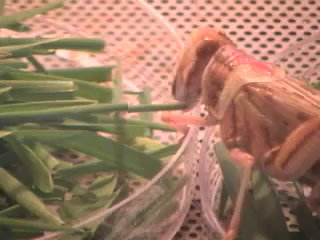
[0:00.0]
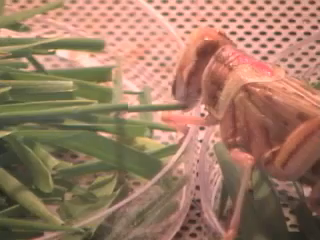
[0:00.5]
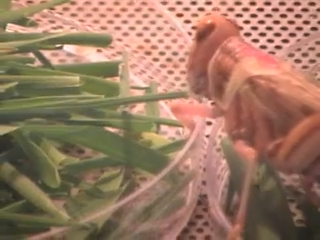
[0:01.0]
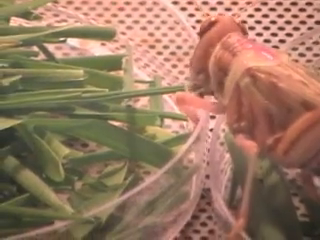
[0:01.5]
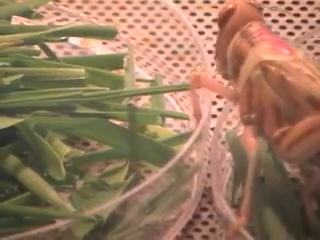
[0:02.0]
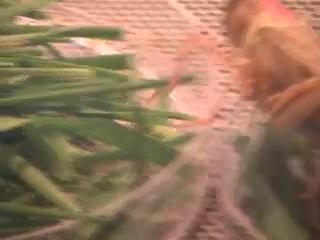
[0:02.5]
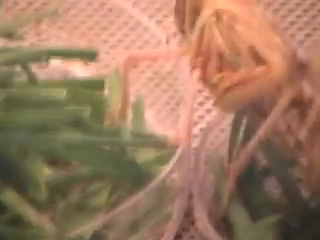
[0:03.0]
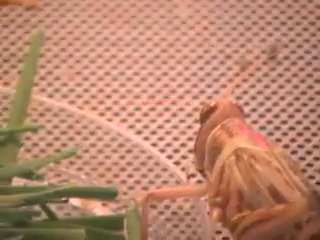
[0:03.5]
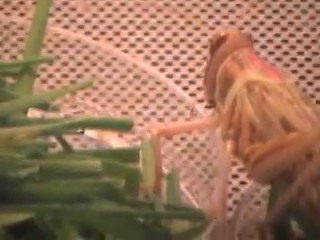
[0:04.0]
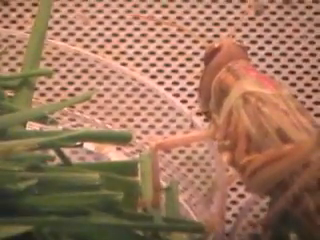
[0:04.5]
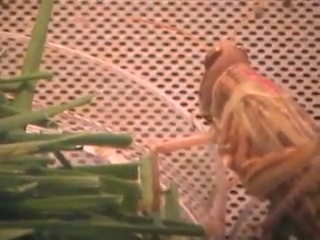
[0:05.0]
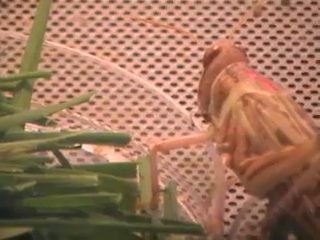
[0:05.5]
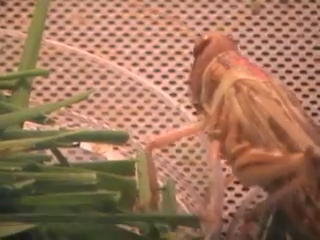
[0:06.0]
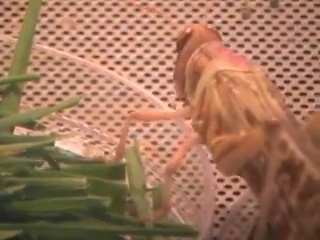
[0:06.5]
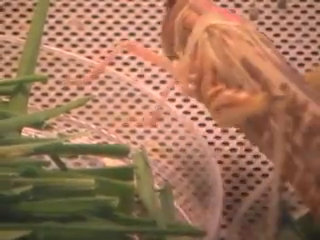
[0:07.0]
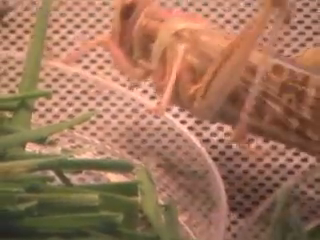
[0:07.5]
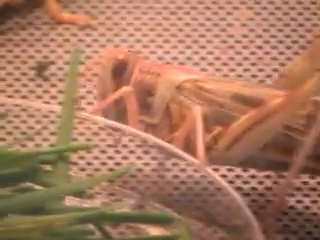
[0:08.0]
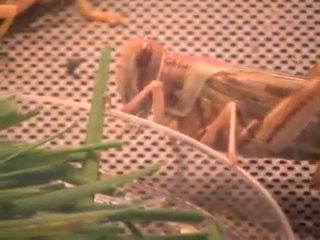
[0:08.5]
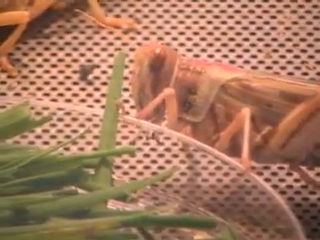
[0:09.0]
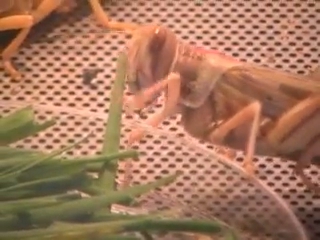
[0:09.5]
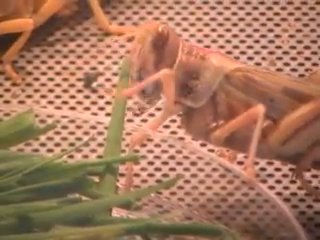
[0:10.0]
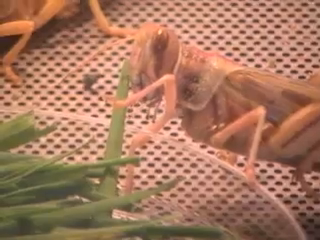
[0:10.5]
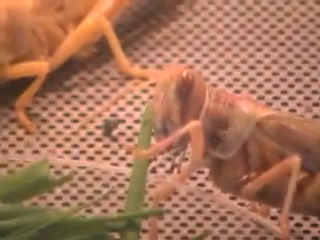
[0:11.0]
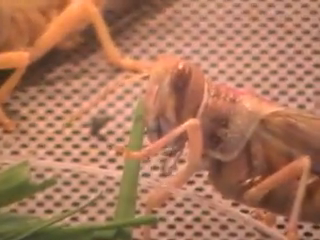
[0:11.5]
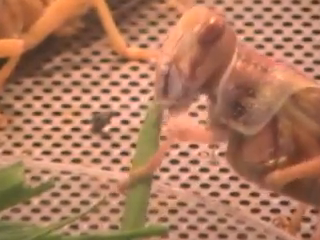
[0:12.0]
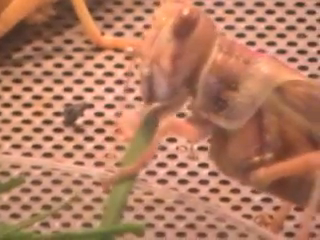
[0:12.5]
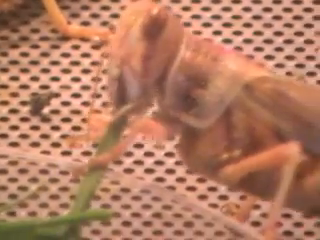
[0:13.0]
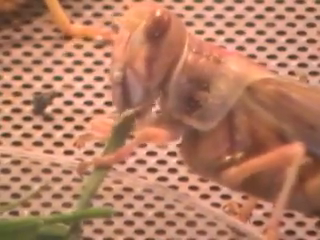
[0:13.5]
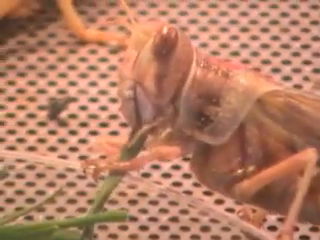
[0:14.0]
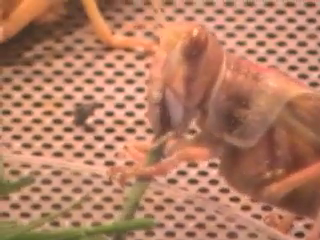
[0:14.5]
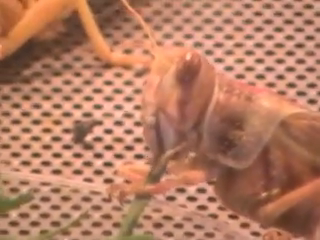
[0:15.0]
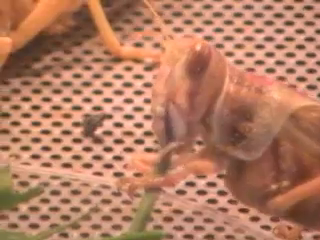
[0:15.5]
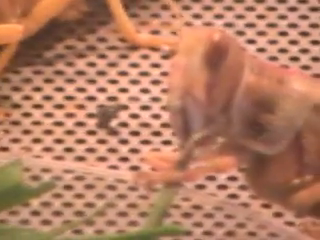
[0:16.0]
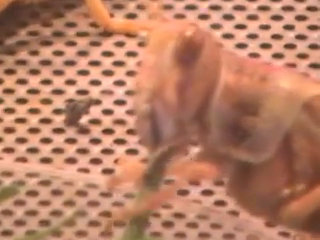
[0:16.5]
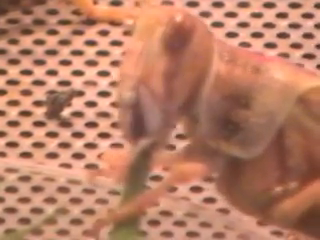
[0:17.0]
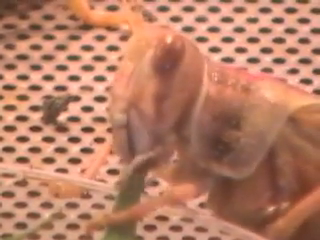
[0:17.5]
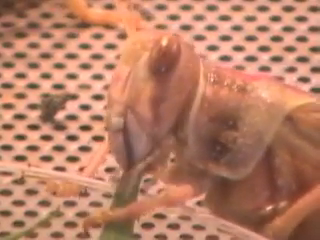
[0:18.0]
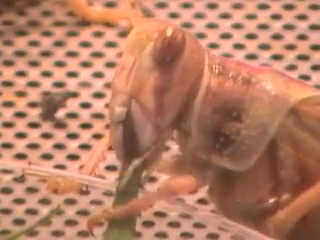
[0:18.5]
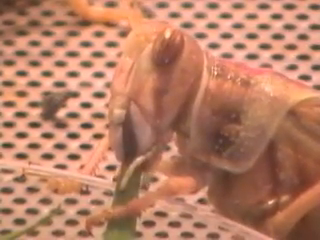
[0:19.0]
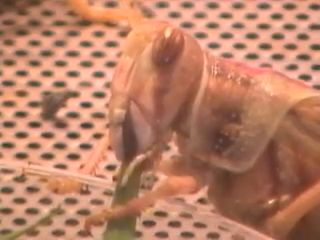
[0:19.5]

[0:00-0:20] A grasshopper eats some grass and kind of walks along the outside of a rimmed area where the grass is kind of portioned off. Light shines down on the grasshopper, making it clearly visible. It kind of uses its legs to position the green strip of grass near its mouth and then kind of chews on the end of the piece of grass. In the background to the upper left is another grasshopper, which doesn't seem to be moving much at the moment. A cup placed inside the mesh area is filled with grass as food for the grasshoppers. The grasshopper is kind of a beige color with some brown stripes and dots, and there is some pink on the back of its neck area.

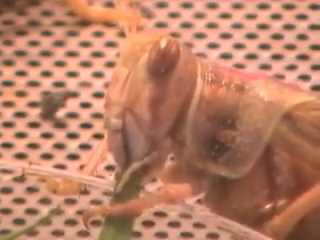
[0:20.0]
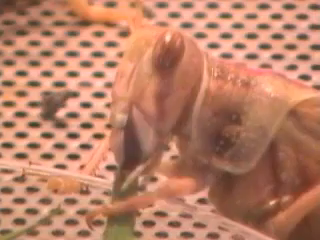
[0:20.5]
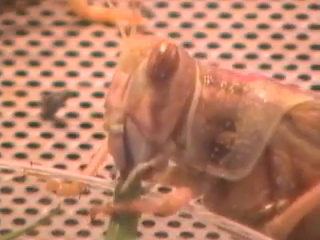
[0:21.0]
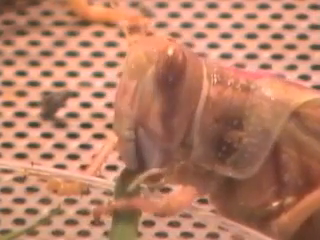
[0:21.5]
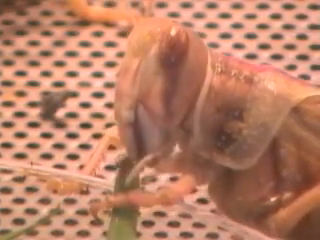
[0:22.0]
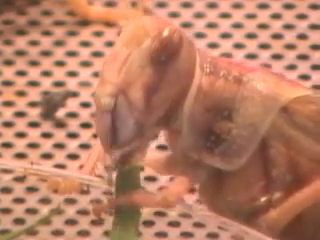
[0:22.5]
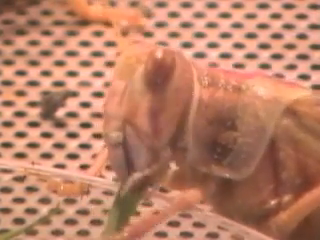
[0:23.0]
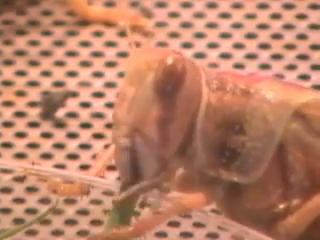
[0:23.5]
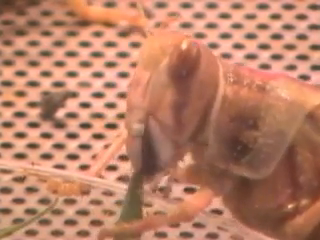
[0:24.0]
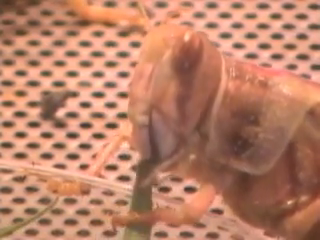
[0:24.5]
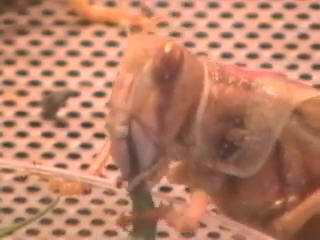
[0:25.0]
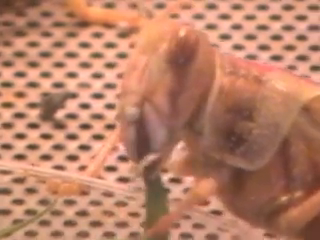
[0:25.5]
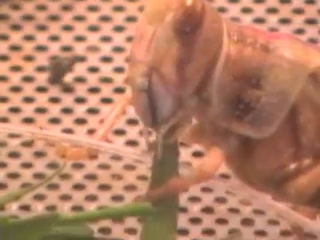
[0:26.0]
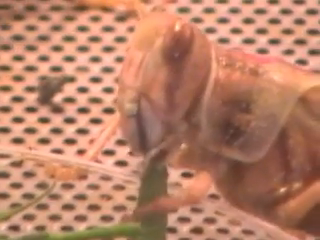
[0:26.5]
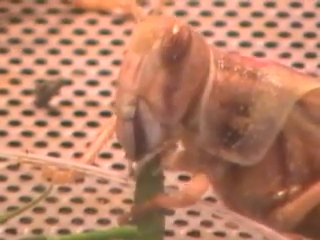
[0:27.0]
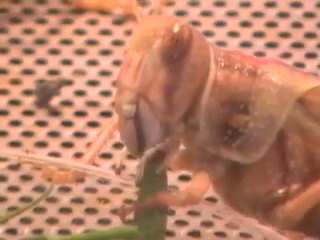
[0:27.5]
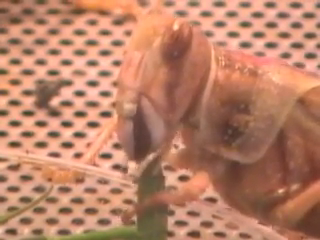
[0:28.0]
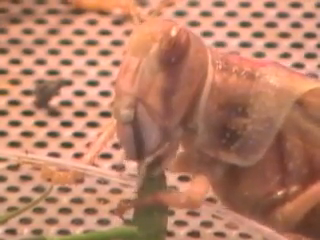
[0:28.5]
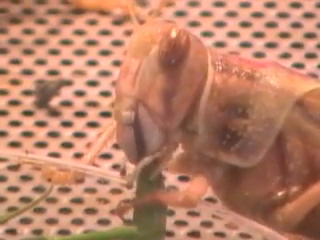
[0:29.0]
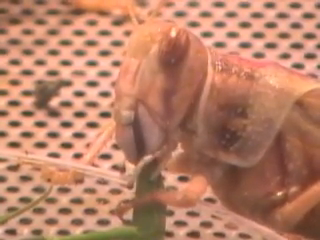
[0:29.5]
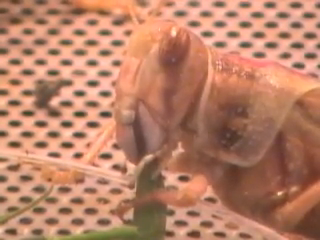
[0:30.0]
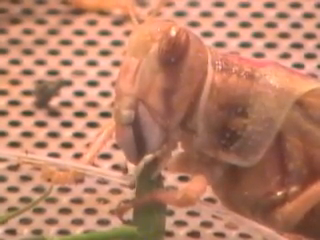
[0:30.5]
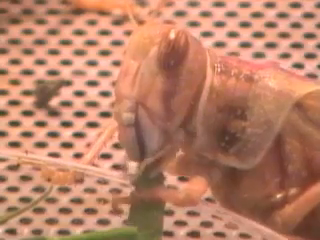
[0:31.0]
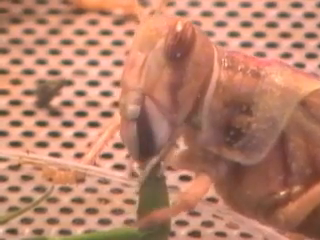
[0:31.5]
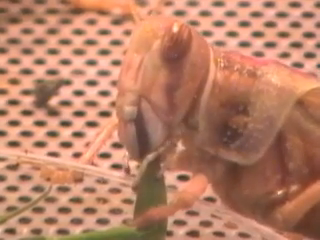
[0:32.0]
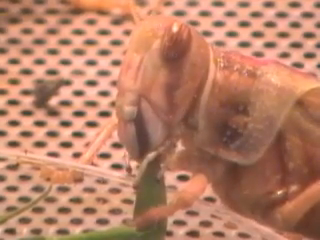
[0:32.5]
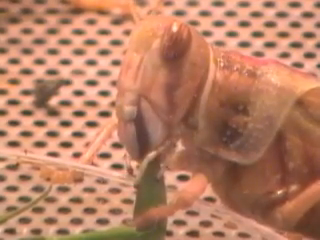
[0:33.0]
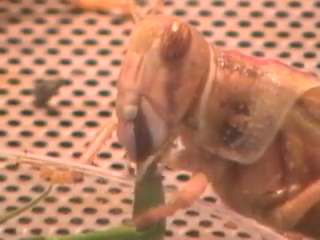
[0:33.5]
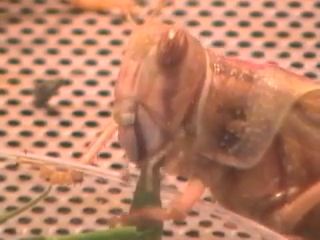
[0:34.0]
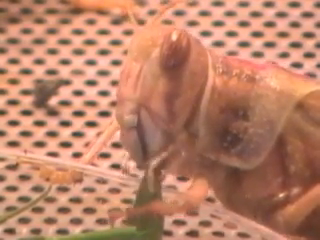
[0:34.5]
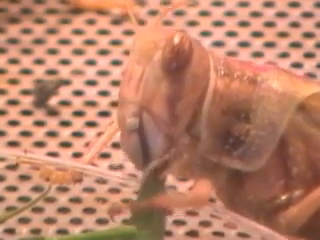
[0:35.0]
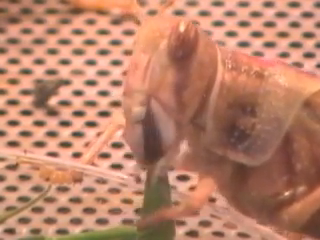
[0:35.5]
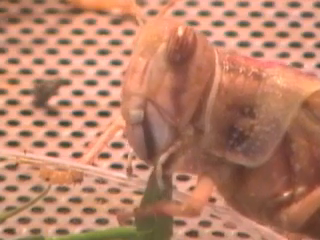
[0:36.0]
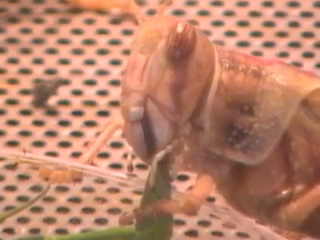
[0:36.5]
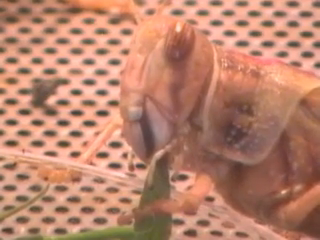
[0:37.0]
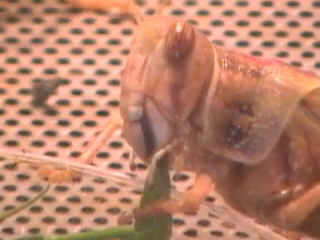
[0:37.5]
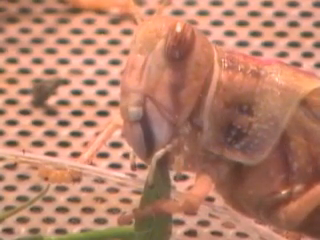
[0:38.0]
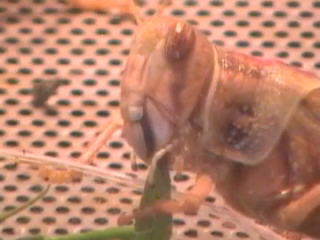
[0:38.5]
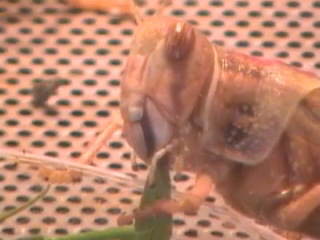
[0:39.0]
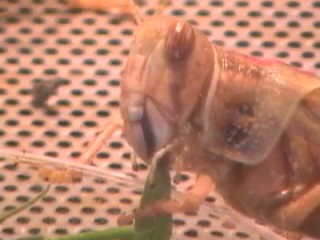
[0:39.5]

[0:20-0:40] A grasshopper chews on a strand of grass in a close, zoomed-in view that kind of shows the features of its mouth and kind of the tips of its claws, which it uses to hold on to the grass. Its eyes are visible in detail and are kind of a reddish brownish color, a little deeper than the rest of its head. Two antennae stick out the top. There is a little pink down its upper back area, and the wing area looks almost iridescent and a little see-through. The whole background is kind of like a white mesh plasticky area, and the grasshopper chews the grass while kind of getting it out of a plastic cup there.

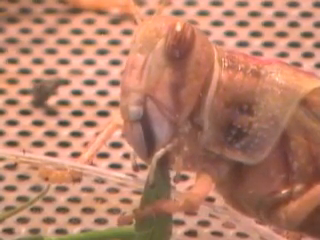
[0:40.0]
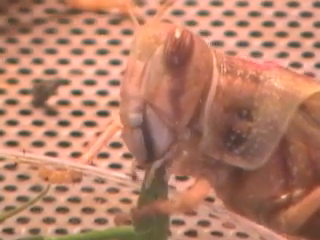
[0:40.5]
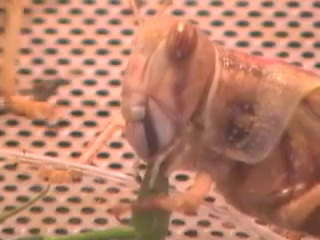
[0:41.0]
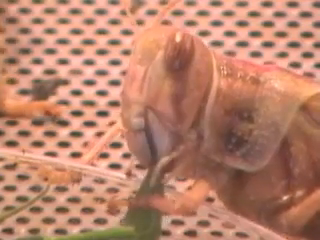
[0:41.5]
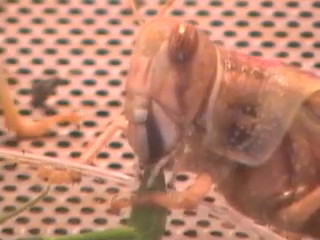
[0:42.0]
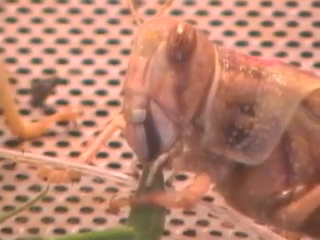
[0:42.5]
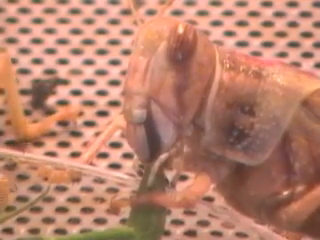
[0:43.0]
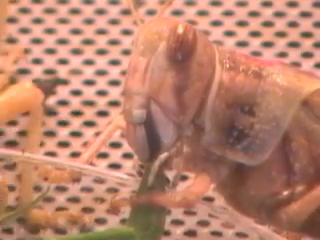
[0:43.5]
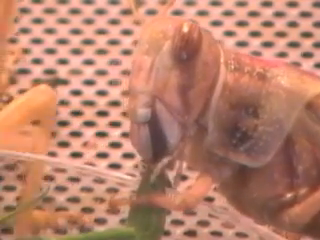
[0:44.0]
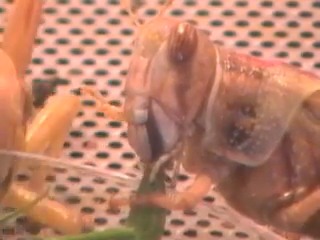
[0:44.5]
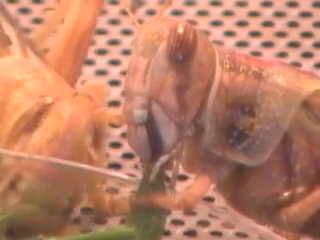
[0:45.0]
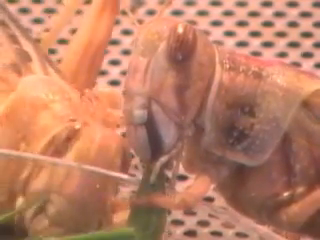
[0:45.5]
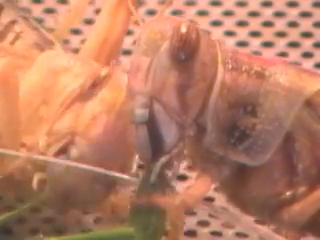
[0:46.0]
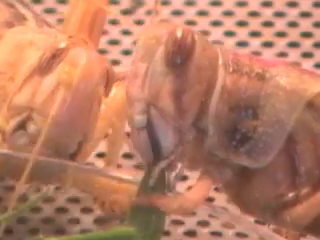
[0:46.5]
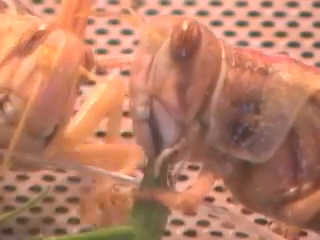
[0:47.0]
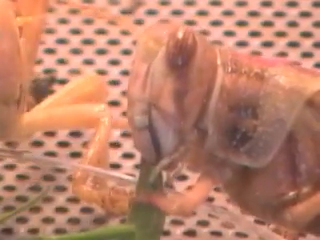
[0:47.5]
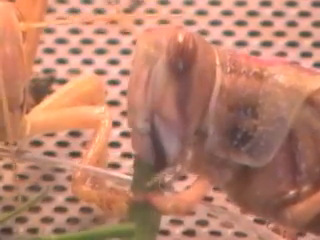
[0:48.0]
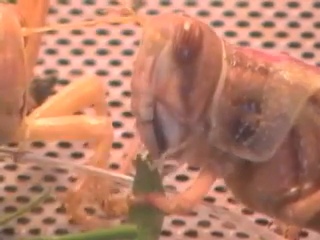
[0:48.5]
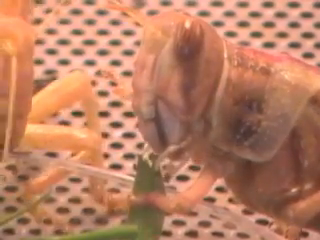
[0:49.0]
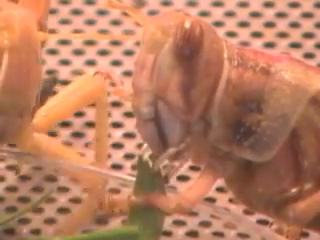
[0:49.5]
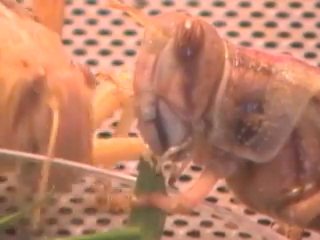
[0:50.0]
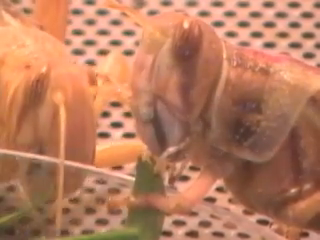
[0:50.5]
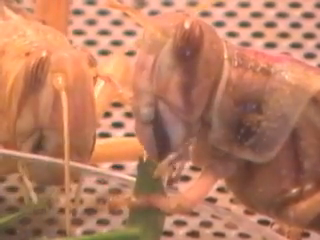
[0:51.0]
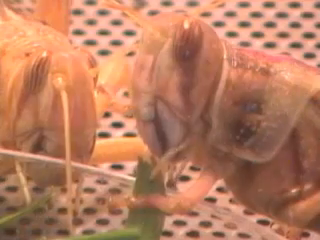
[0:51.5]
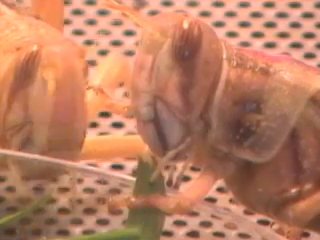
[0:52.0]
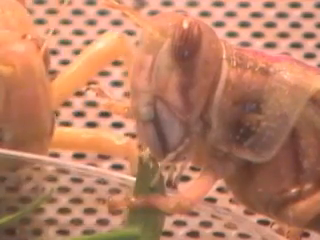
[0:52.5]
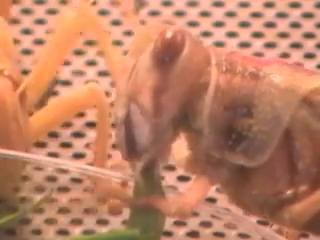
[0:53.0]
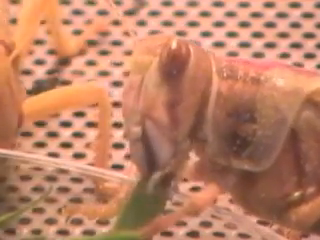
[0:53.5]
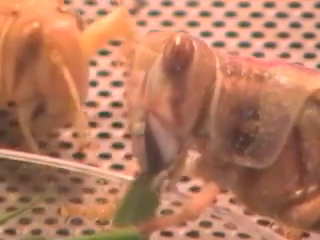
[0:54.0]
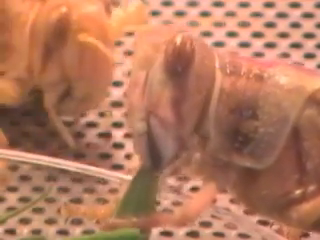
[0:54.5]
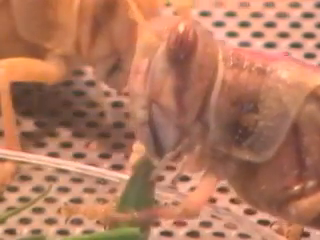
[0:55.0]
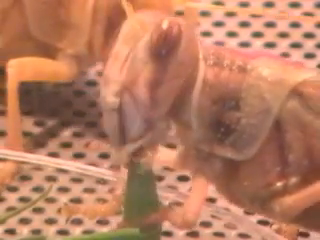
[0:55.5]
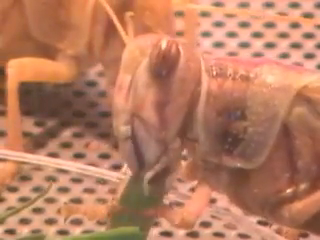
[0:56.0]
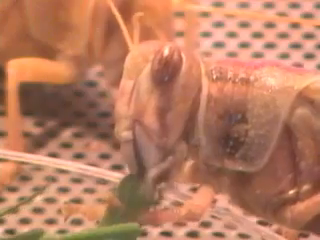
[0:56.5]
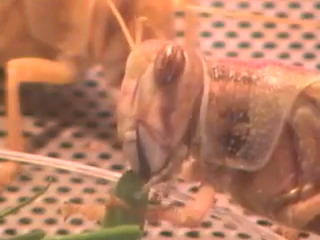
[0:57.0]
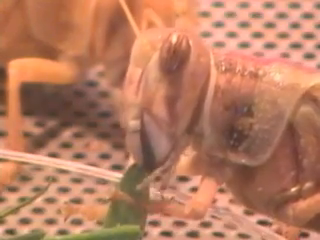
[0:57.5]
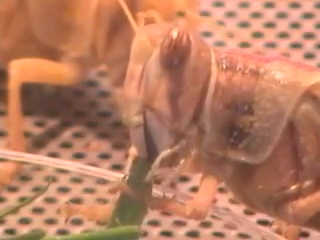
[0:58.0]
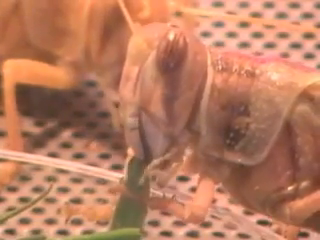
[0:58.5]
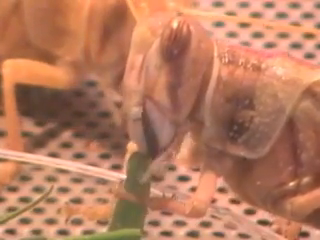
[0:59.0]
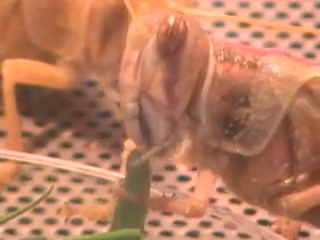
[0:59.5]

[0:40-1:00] A grasshopper is inside a mesh plasticky container where maybe someone is feeding and taking care of it. It chews on a strand of grass as another grasshopper comes over on the left side of the frame, apparently also trying to eat maybe a little strand of grass, then kind of moves back and away. The first grasshopper stays more toward the front, continuing to eat the green blade of grass. It is not a typical dark green but more of a beige color that is kind of a little iridescent and a little see-through in some areas, including the kind of wing area on the back of its neck, where a whole strip of pink runs down. Its antennae are on the top, one out the left and one out the right, and they are pretty small.